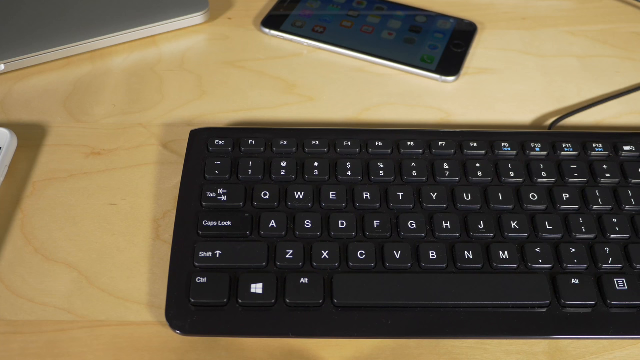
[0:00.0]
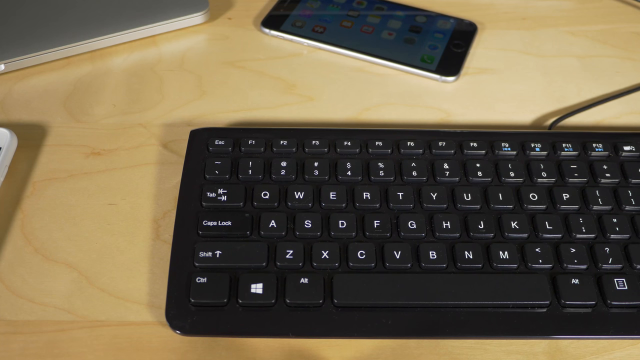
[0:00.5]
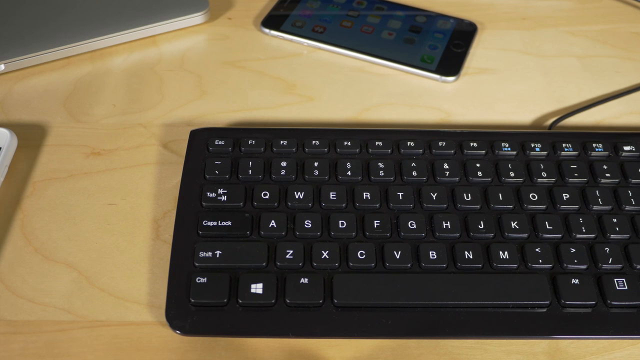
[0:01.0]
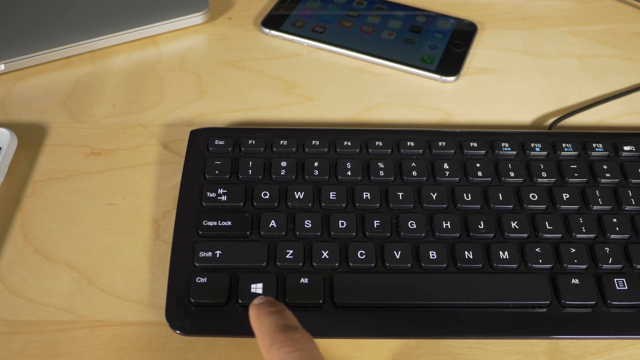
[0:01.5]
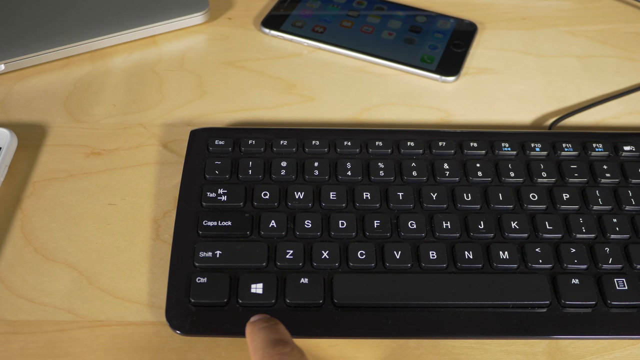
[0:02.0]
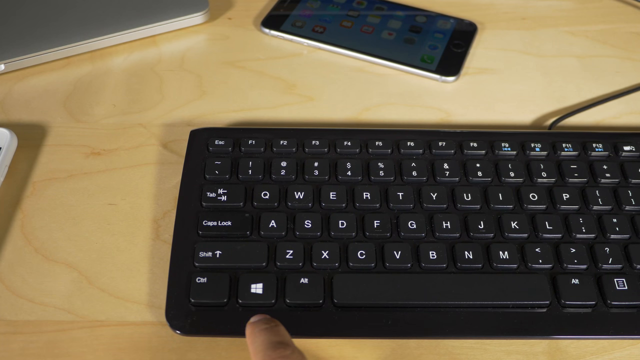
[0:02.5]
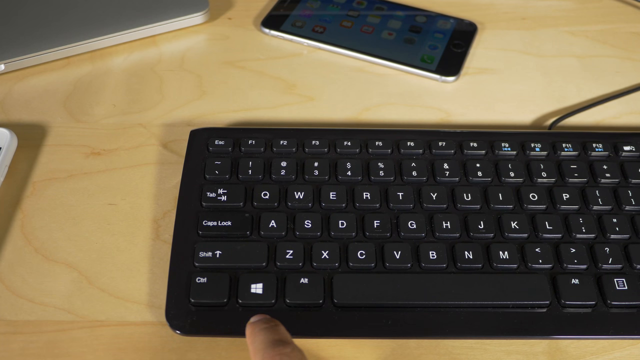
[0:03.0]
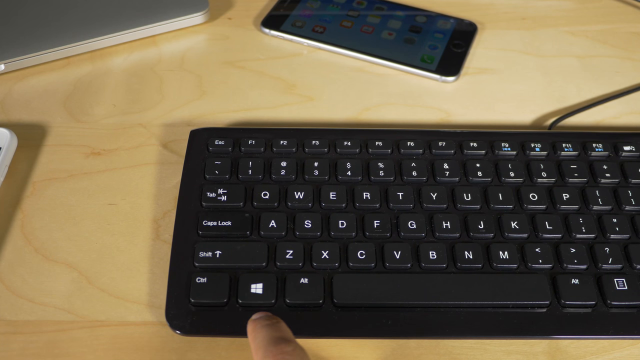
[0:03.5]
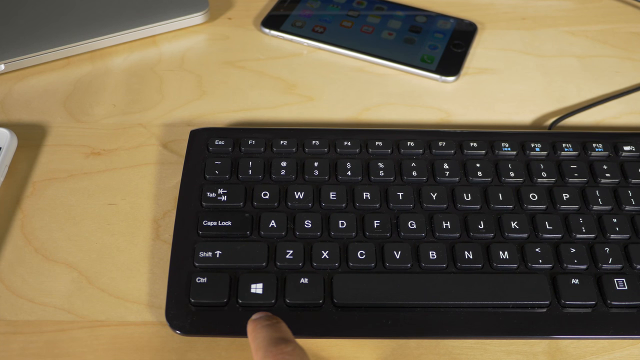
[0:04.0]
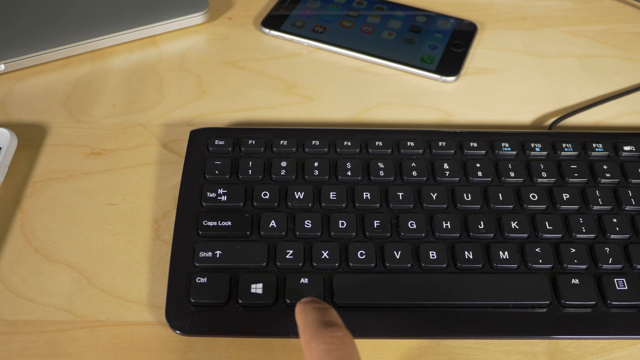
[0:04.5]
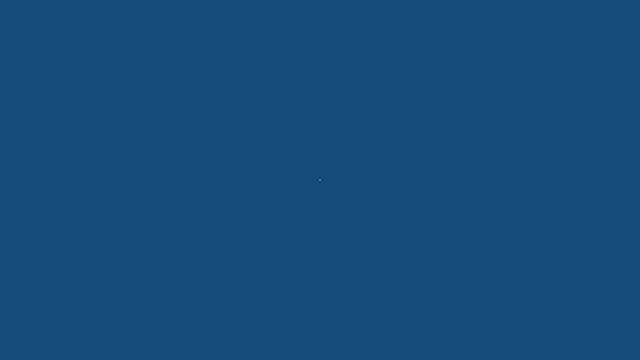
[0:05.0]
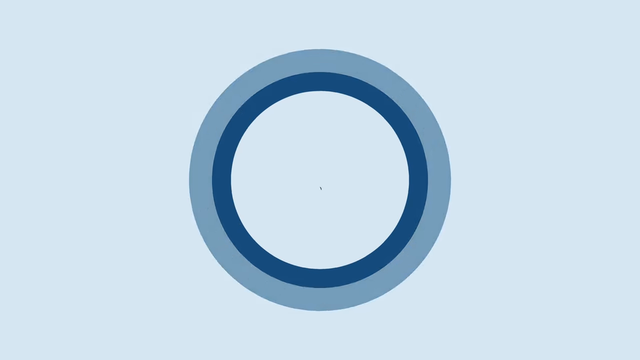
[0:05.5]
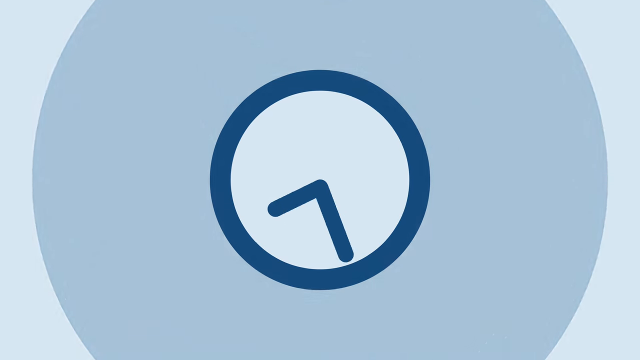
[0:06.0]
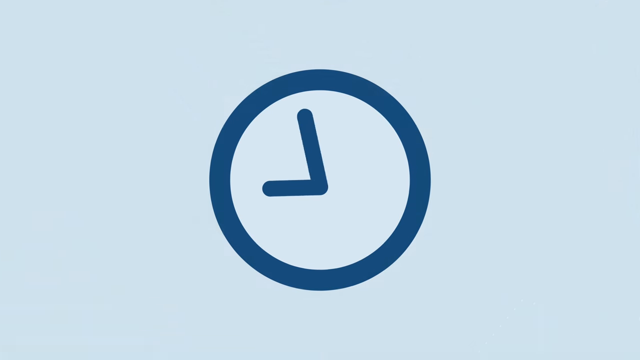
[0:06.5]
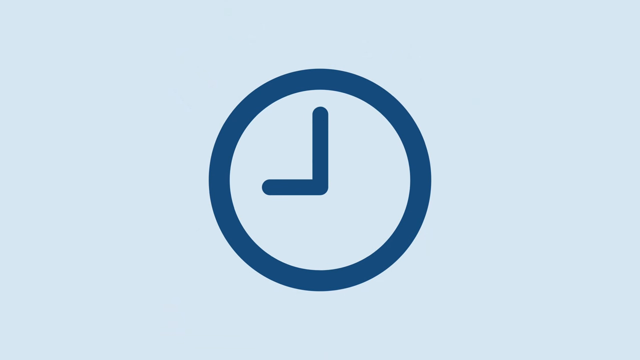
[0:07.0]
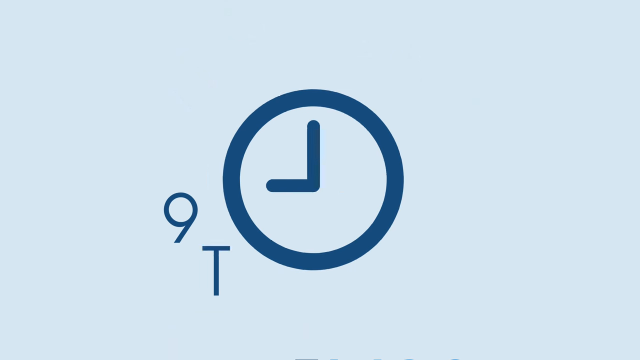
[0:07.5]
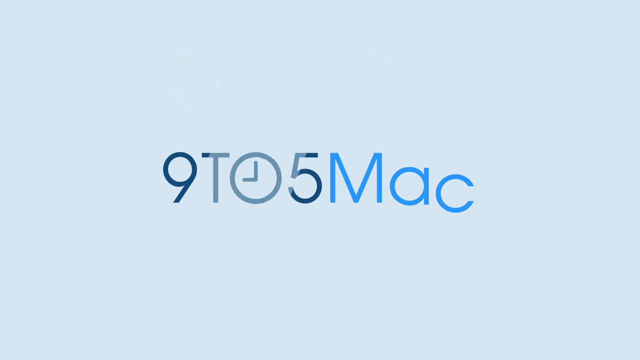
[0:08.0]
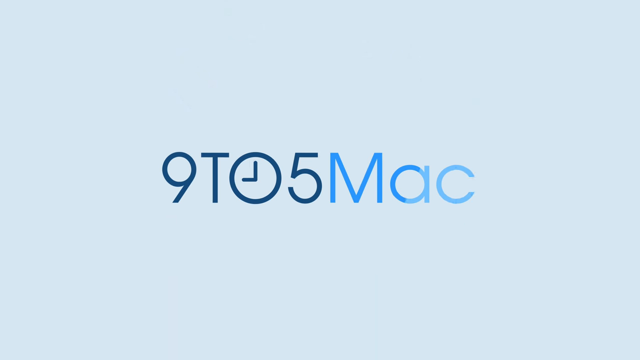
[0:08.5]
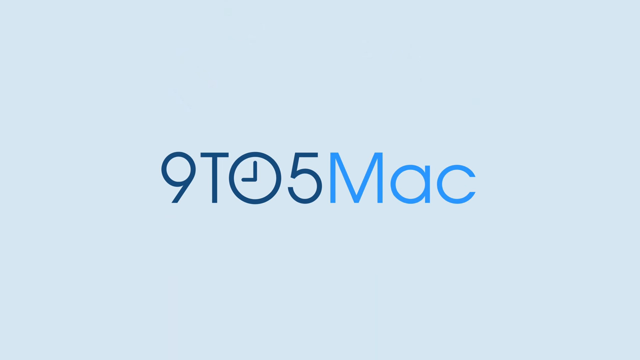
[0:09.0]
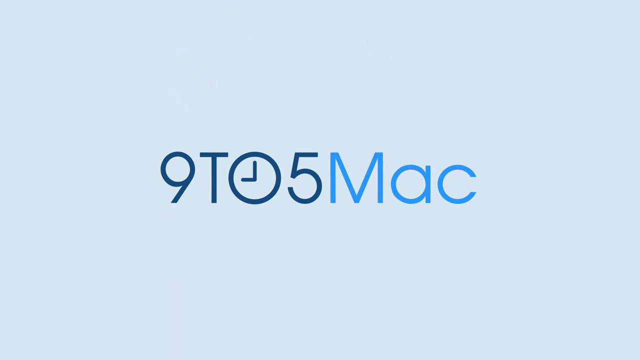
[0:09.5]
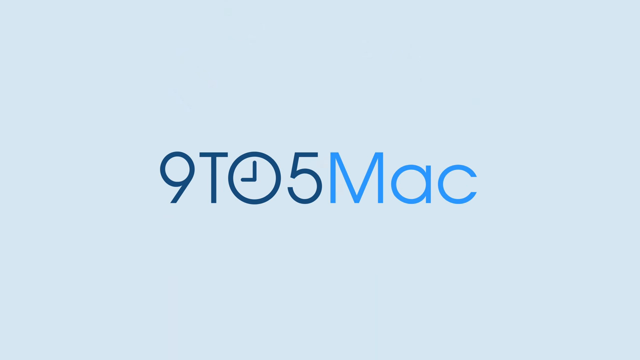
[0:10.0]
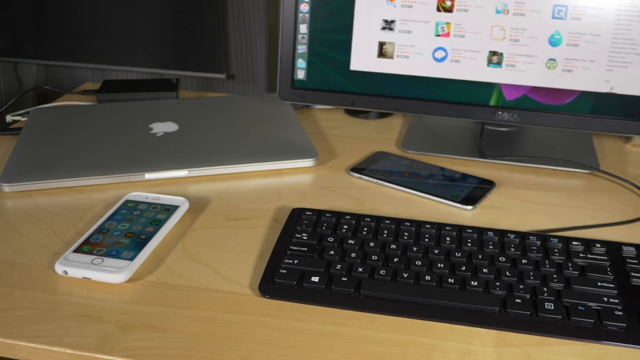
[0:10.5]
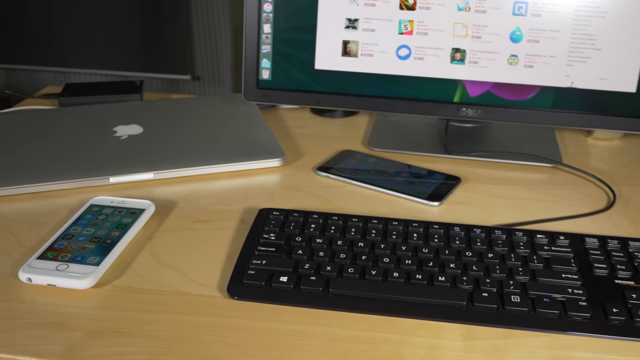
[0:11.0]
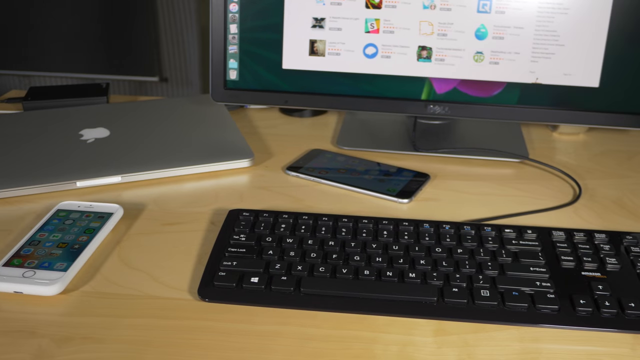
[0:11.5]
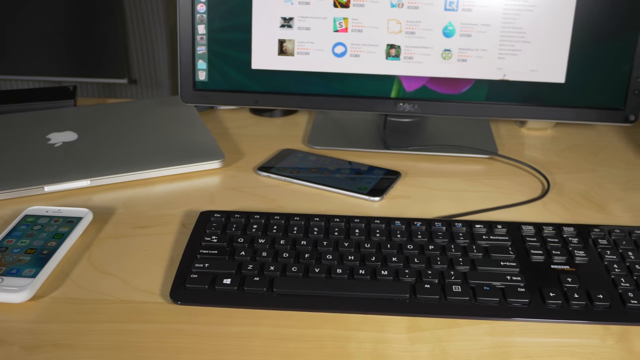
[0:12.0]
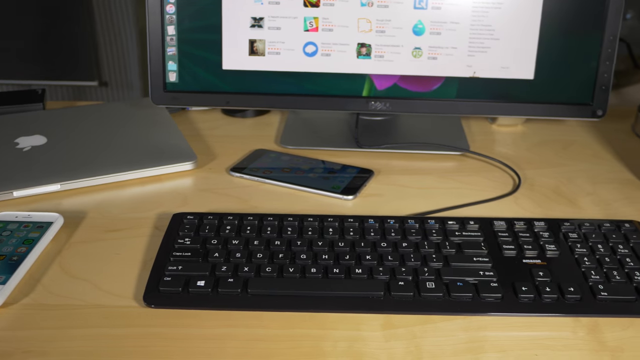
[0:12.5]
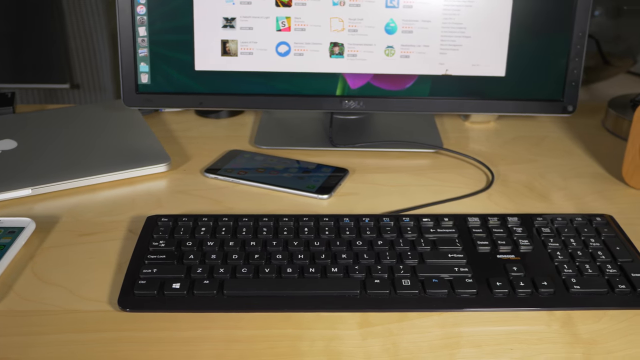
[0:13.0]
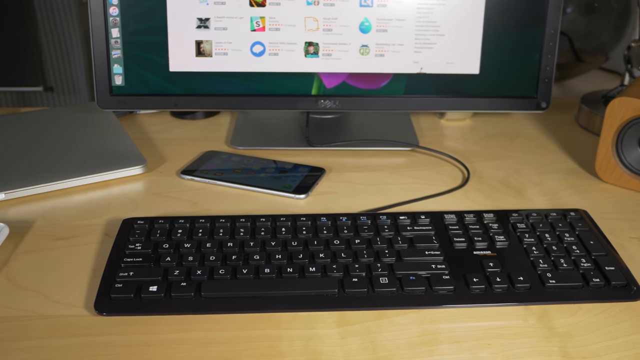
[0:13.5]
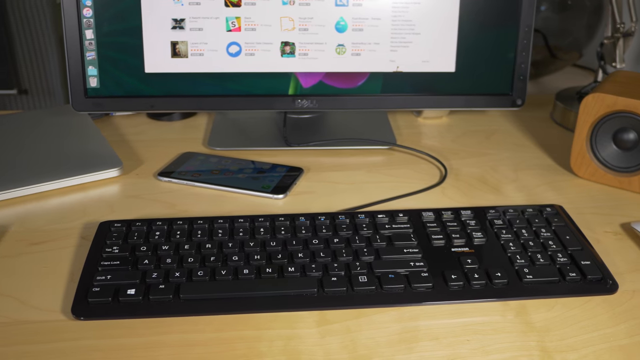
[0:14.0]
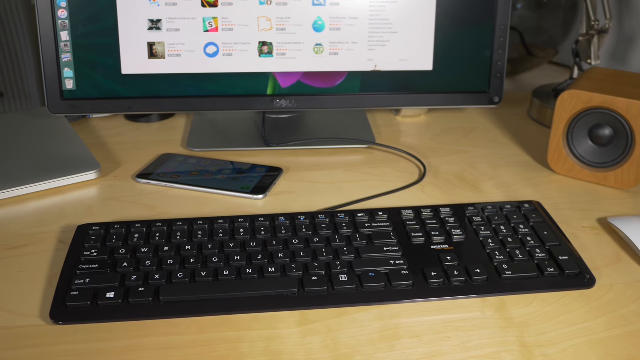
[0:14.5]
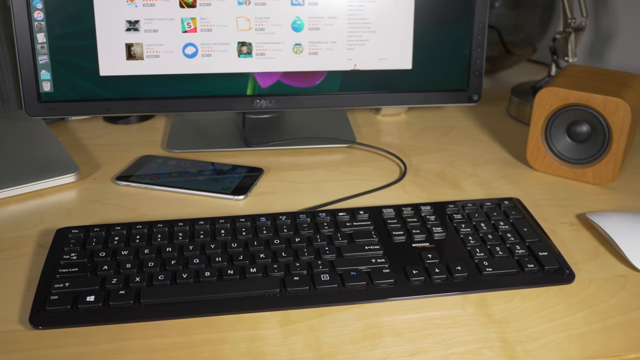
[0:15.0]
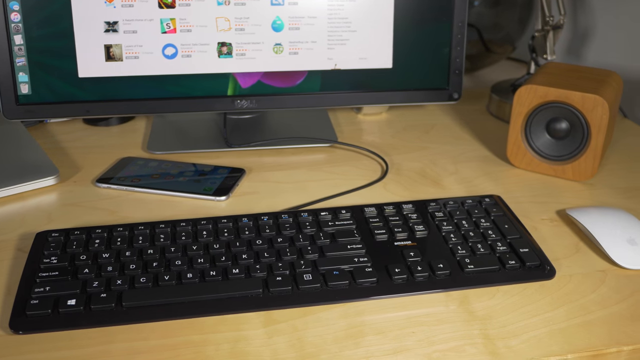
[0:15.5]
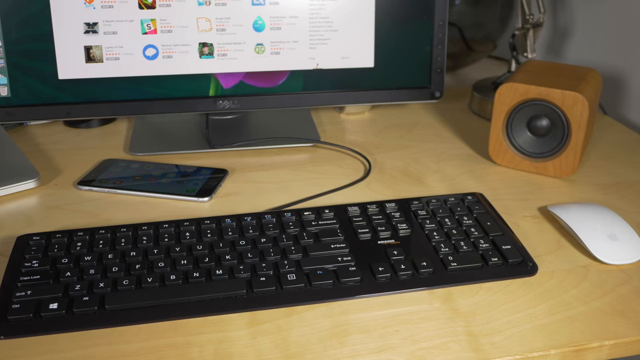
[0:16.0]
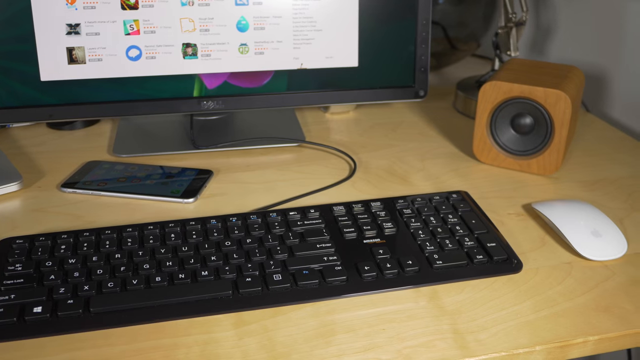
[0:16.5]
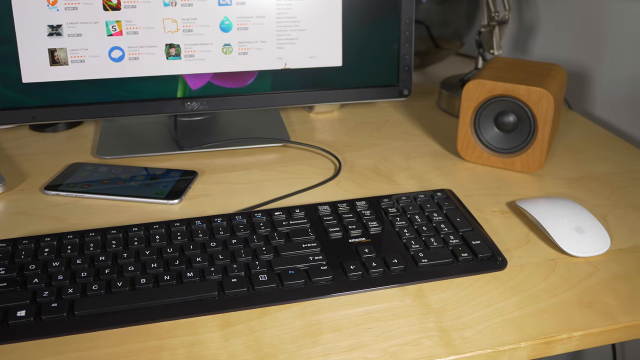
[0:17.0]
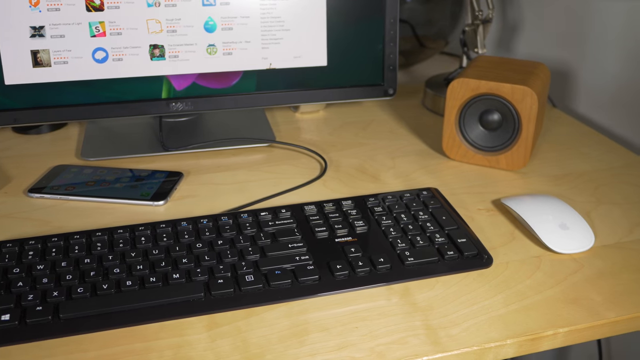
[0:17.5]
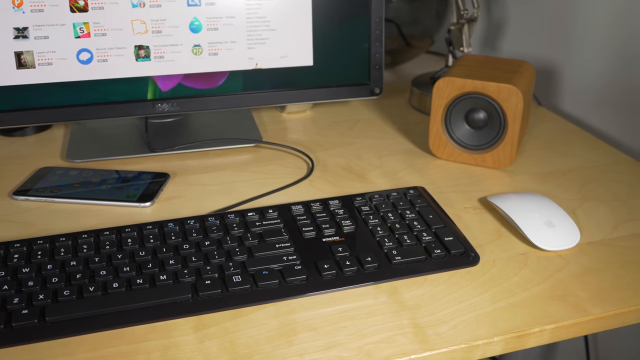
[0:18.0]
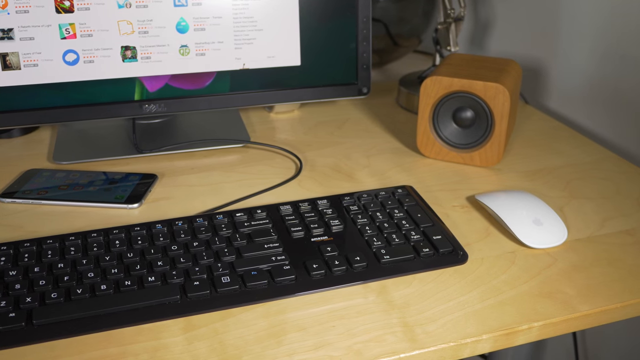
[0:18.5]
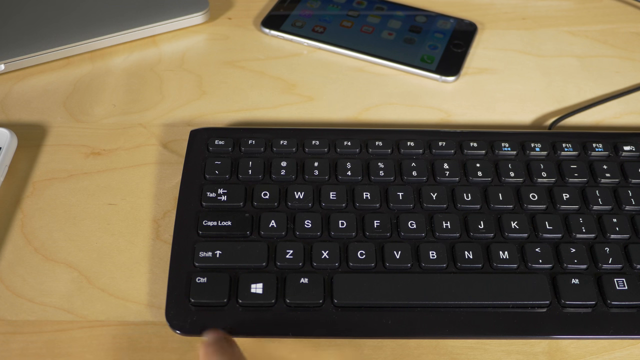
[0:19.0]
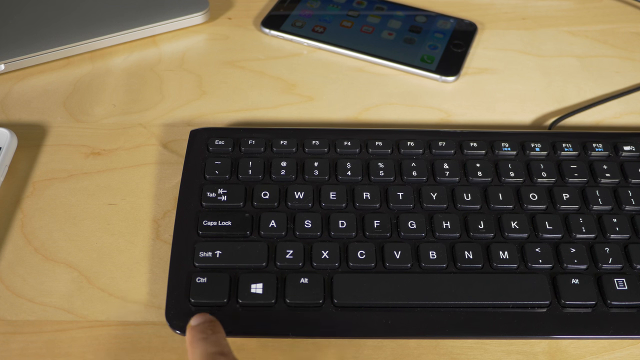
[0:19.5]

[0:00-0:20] A light-colored table fills the frame, with a smartphone at the top of the screen and a black keyboard taking up most of the bottom. Someone puts what appears to be their left index finger on the Windows key at the bottom of the keyboard and taps it a couple of times, then taps below the Alt button, just beside it. A flashing, kind of bluish-green screen appears, followed by a clock that becomes a logo reading "9to5mac". The logo stays on screen before the view returns to the desk. Now an Apple laptop, a white smartphone, a darker smartphone and the same keyboard are visible, along with a computer screen that is on at the back, which appears to be a Dell. The camera kind of zooms to the right, showing the entire table and more of the desk; on the right there appears to be a white mouse, plus a speaker. The shot ends back on the keyboard, where the person taps just below the Control button.